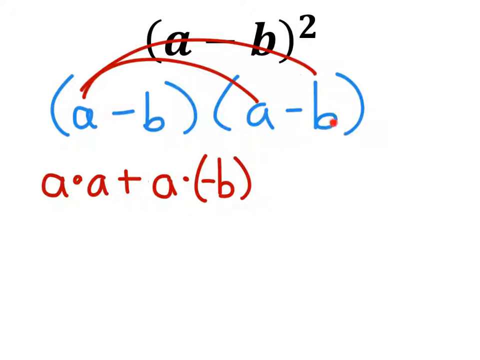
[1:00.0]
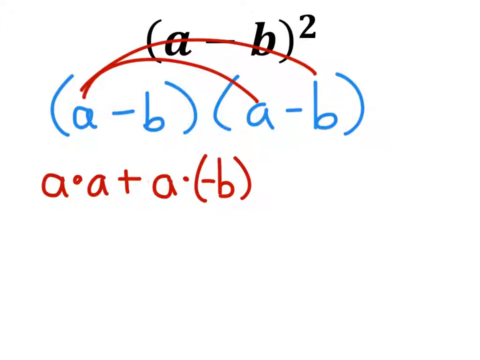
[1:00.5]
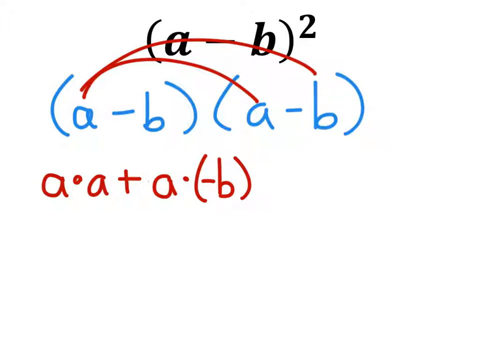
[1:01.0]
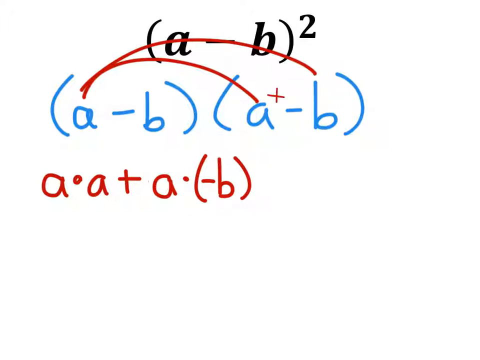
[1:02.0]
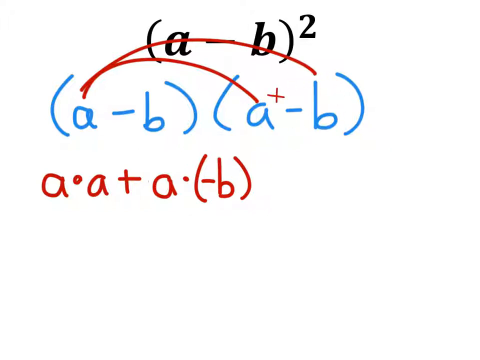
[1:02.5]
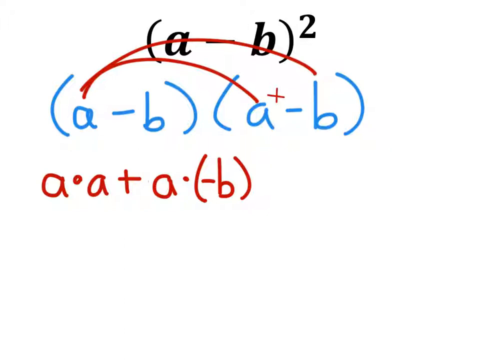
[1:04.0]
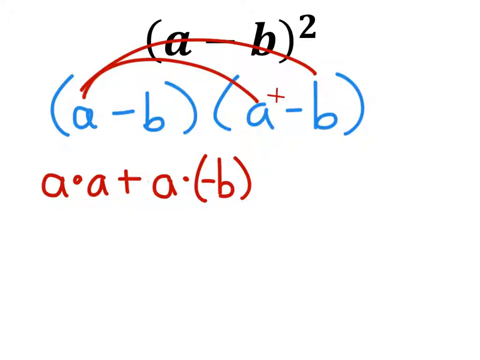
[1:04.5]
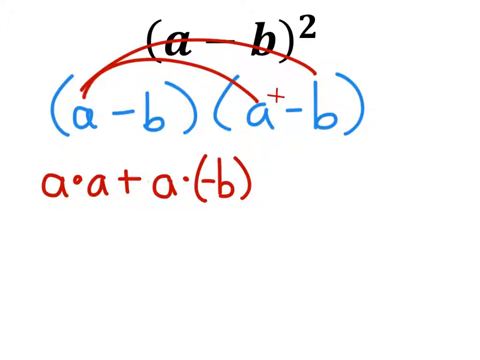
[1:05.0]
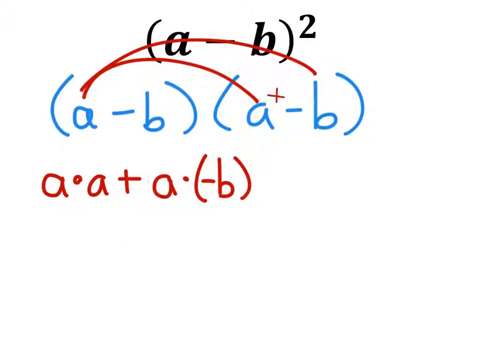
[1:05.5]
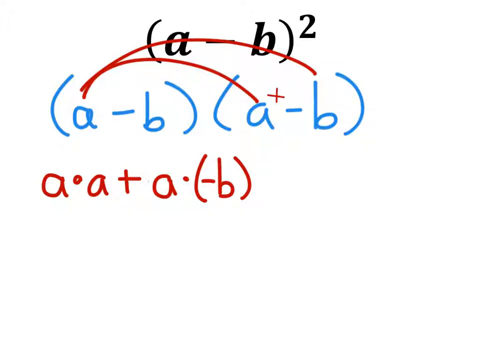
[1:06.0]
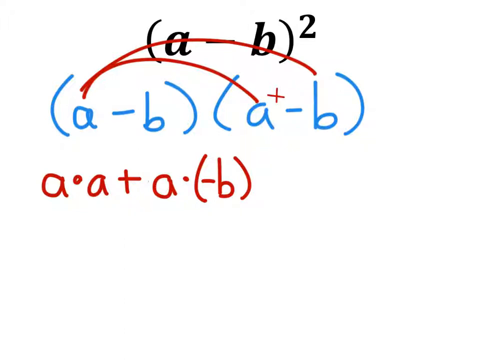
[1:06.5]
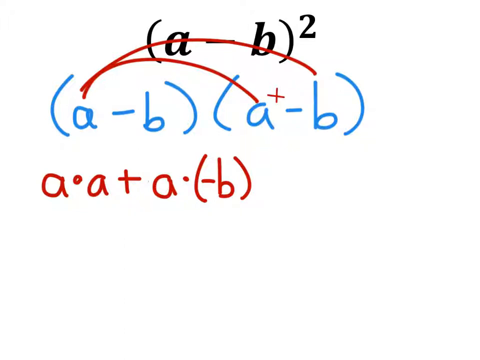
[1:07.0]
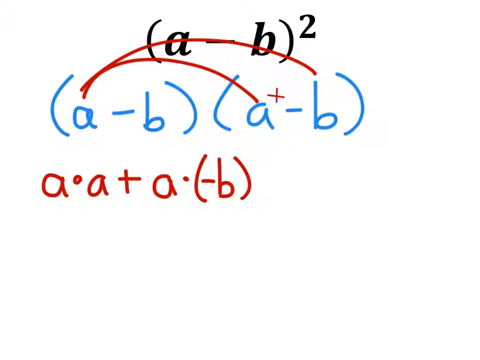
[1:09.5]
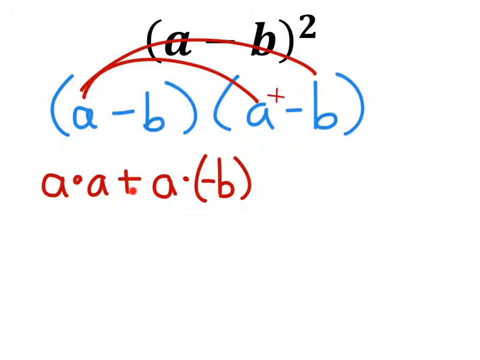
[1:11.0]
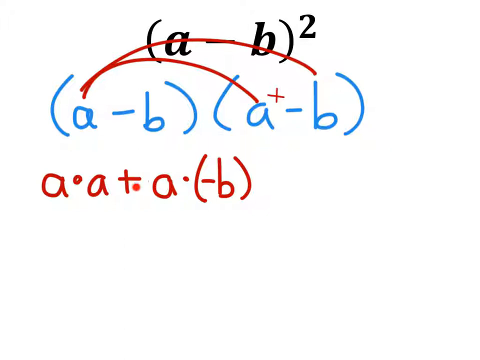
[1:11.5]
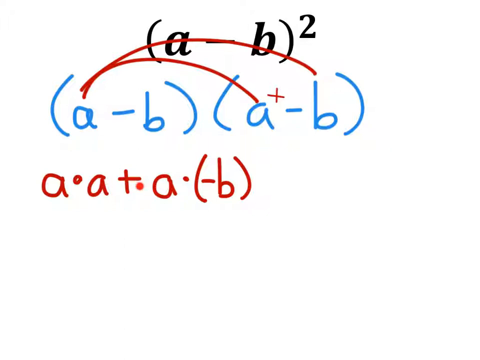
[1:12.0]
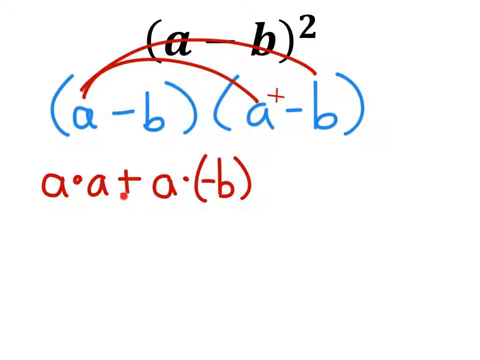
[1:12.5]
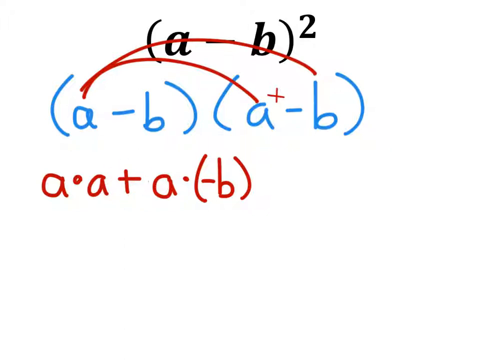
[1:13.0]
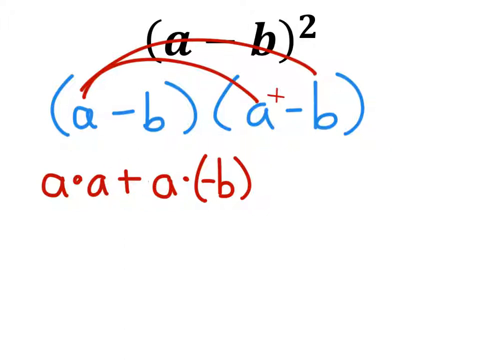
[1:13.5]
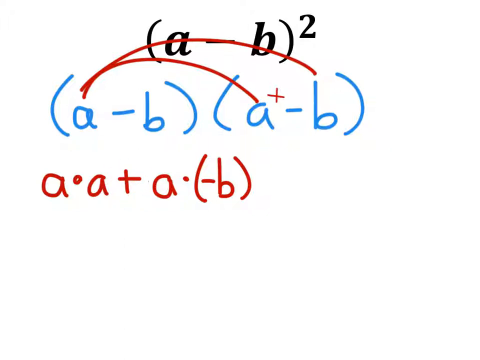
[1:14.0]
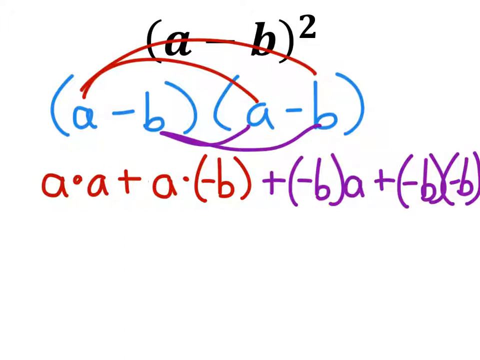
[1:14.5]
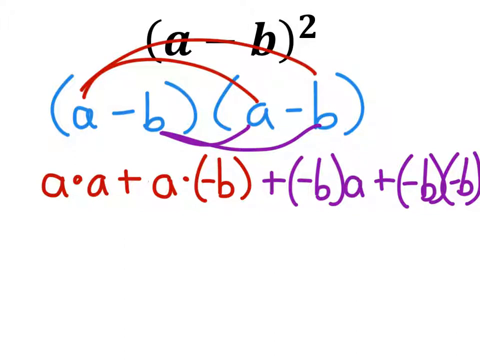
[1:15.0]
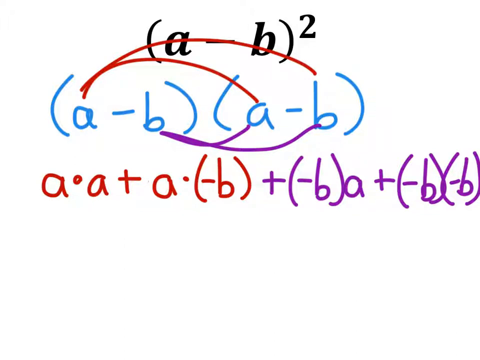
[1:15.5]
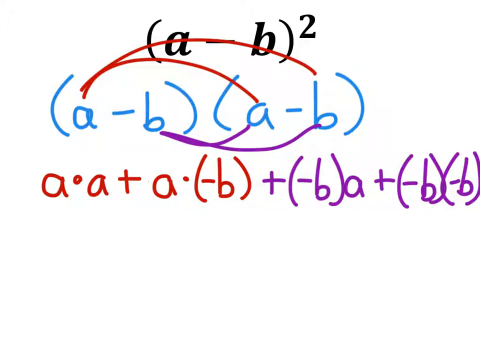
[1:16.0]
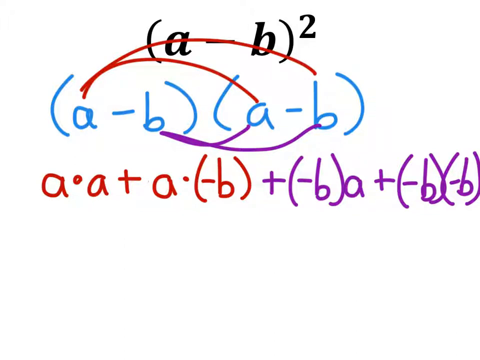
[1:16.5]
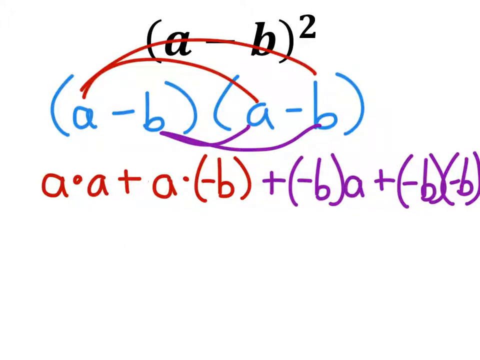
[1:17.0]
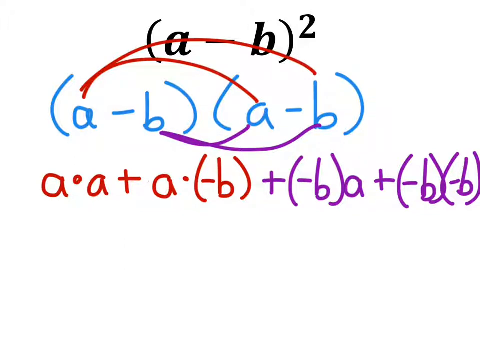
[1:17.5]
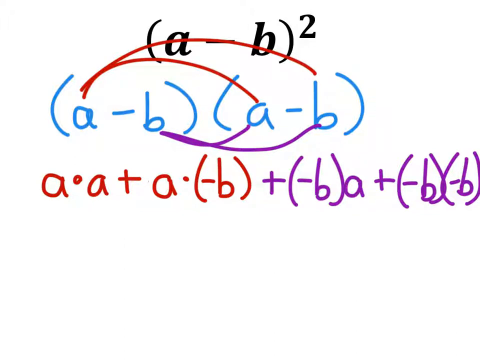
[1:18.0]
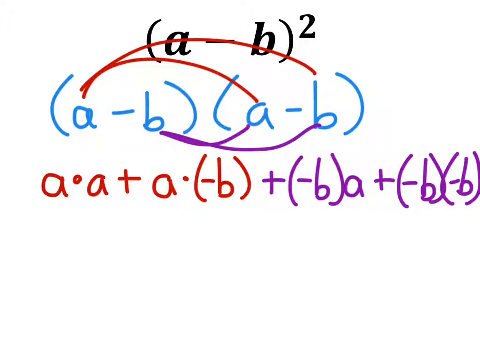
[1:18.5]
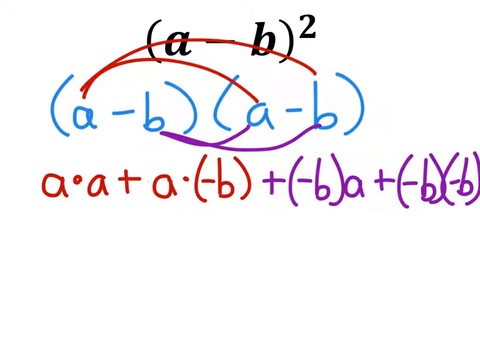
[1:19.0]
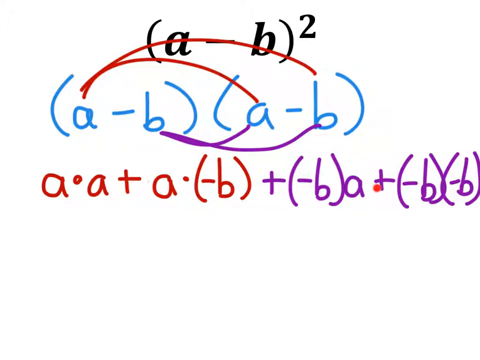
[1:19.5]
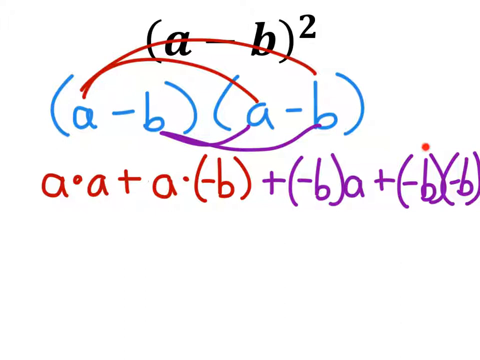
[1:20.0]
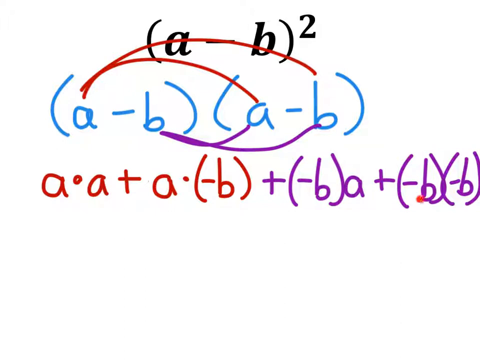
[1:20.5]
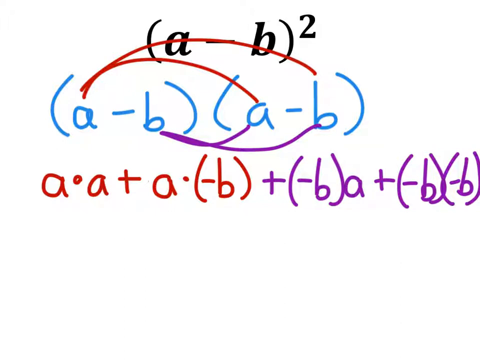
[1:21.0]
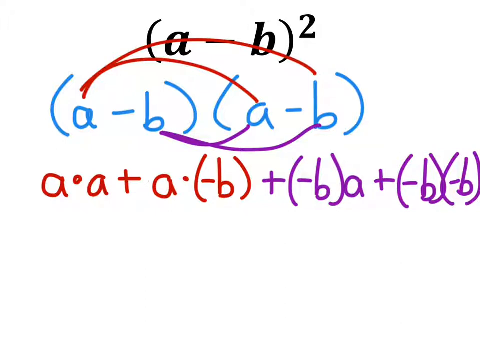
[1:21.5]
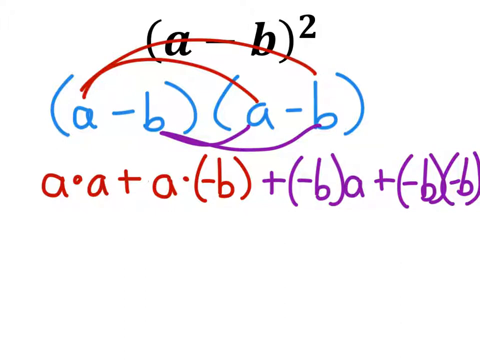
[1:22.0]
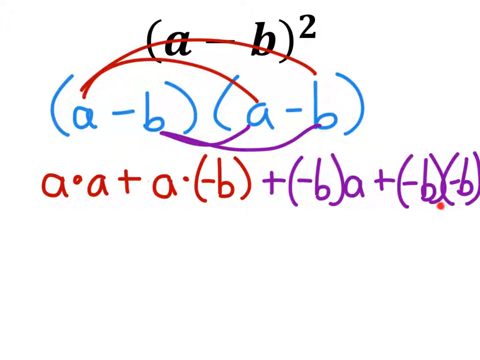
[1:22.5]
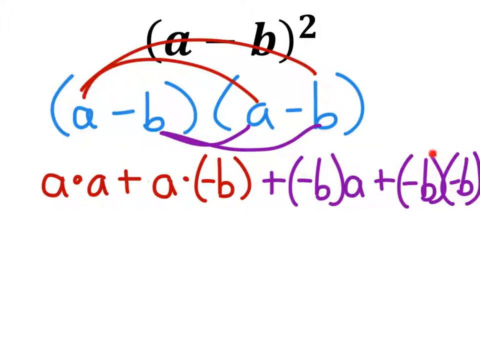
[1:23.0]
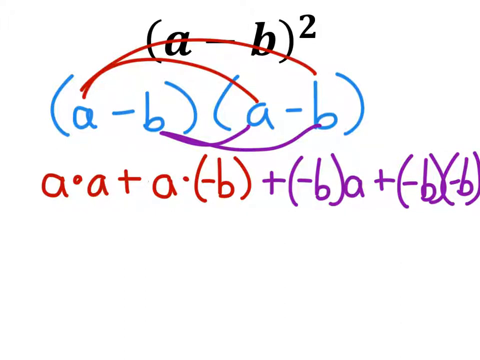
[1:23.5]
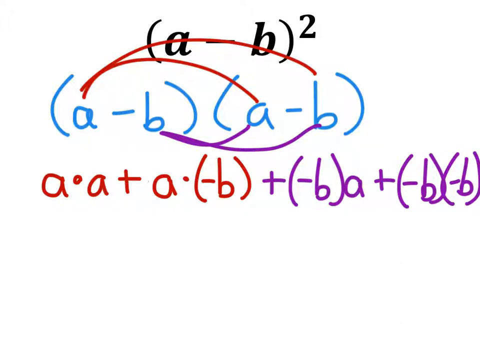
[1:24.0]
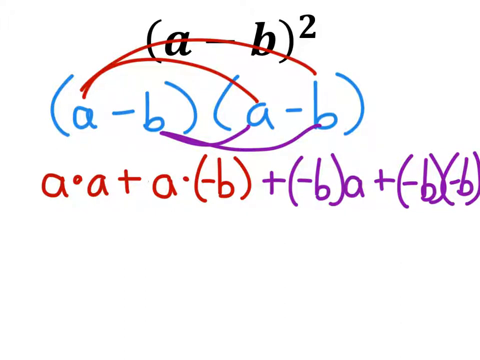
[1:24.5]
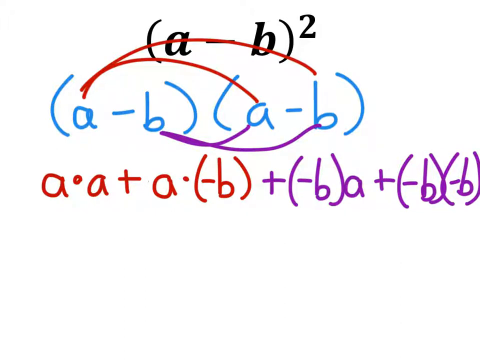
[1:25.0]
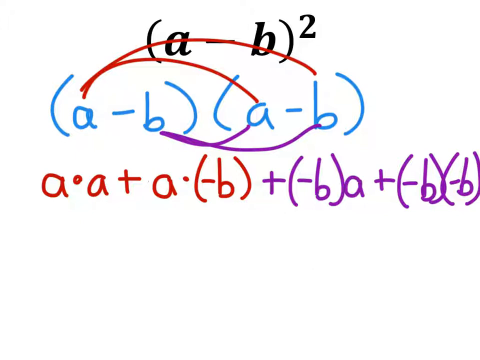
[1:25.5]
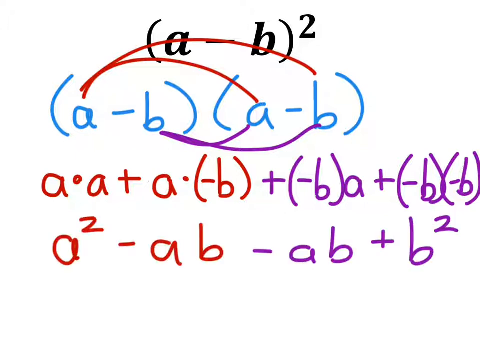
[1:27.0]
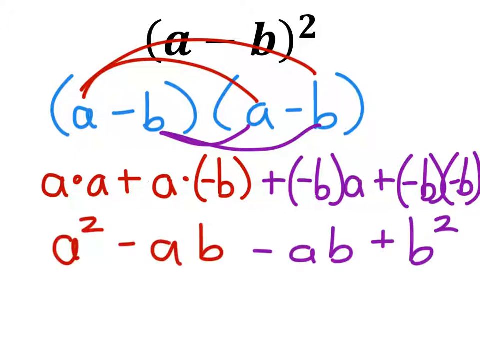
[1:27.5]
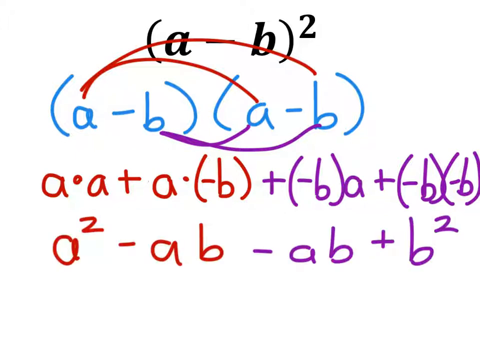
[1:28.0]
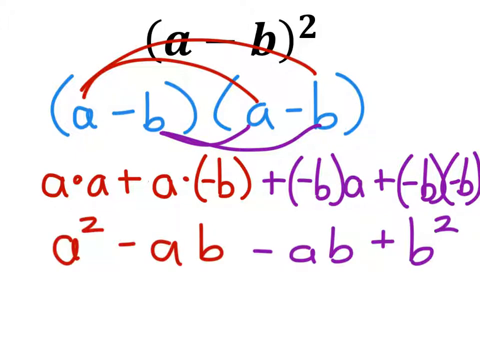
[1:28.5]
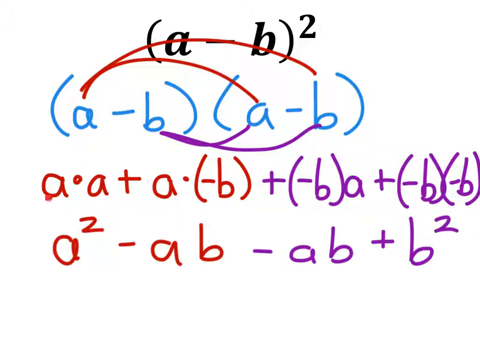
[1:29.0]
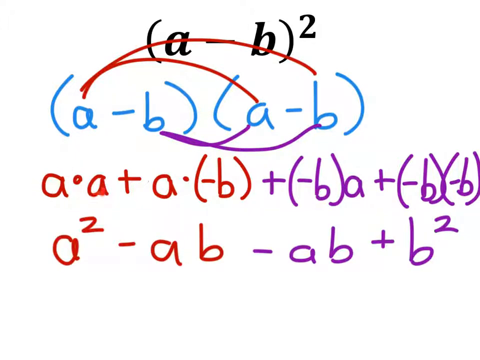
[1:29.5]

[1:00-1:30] On a white background, (A − B)² is written in black. Under it, (A − B)(A − B) is written in blue, with two red lines above it, one going from A to A and one from A to B. Beneath, everything is put together in red as A × A + A × (−B). The instructor moves the cursor around the screen to point out specific areas, such as circling the plus sign. Purple lines then appear, going from B to A and from B to B, and + (−B)A + (−B)(−B) is added to the equation.